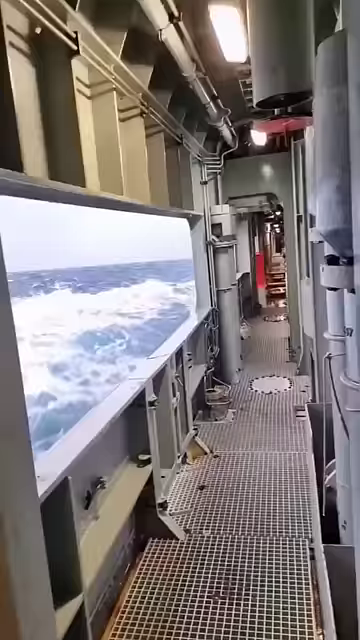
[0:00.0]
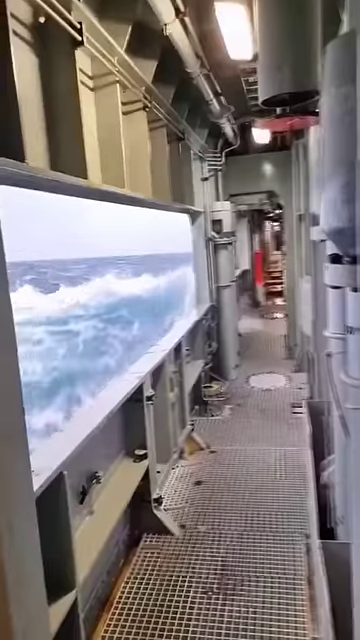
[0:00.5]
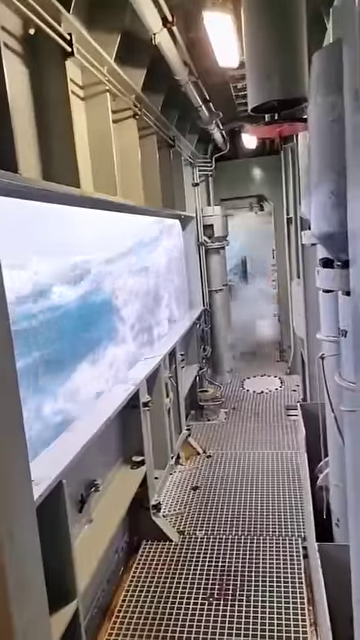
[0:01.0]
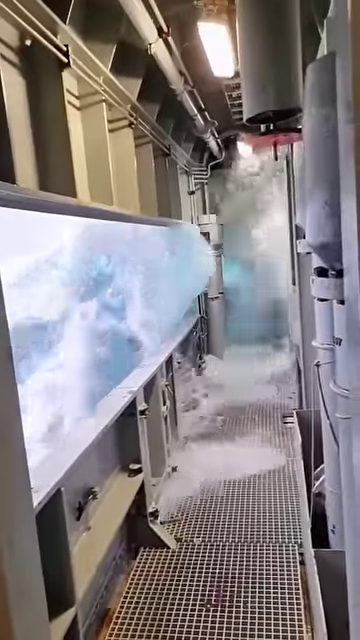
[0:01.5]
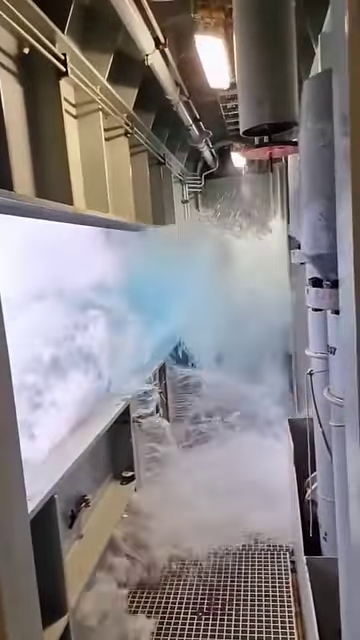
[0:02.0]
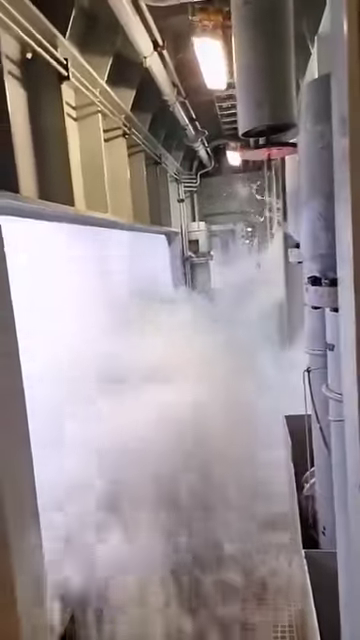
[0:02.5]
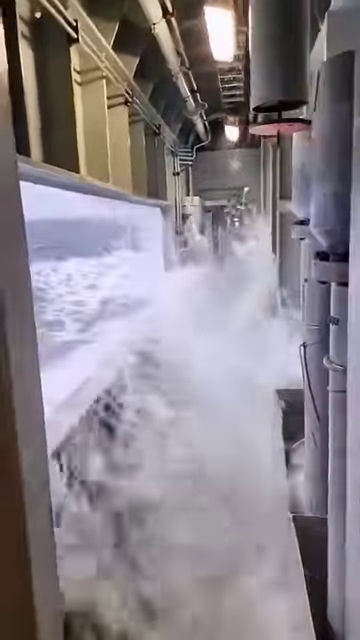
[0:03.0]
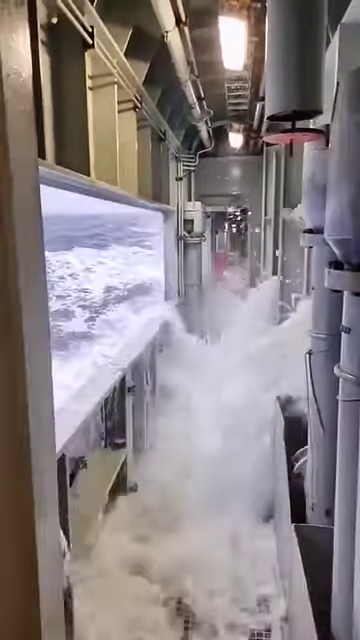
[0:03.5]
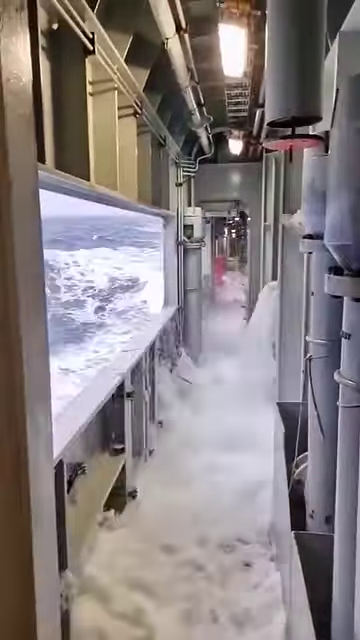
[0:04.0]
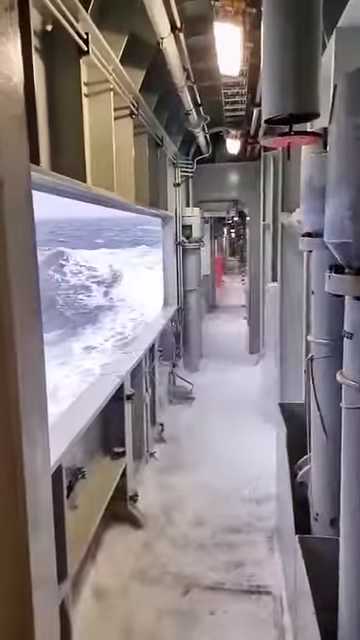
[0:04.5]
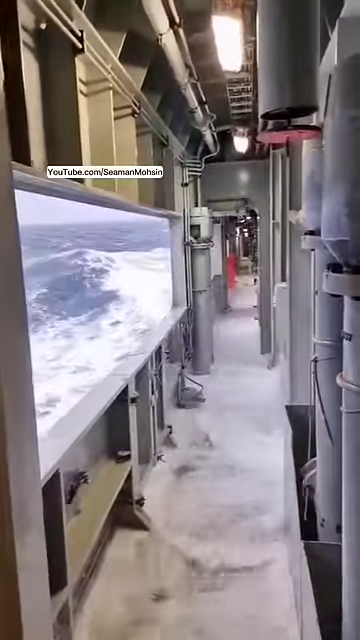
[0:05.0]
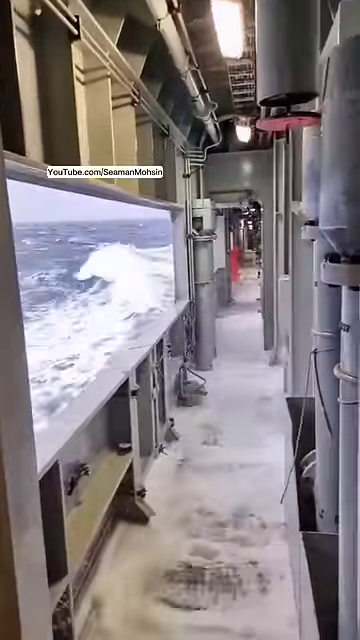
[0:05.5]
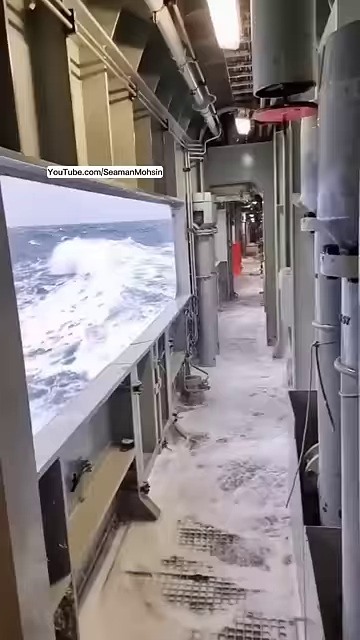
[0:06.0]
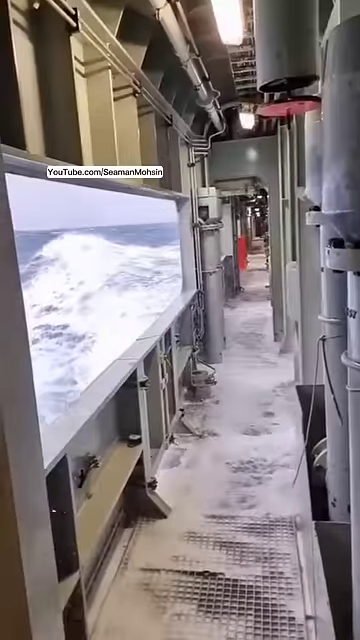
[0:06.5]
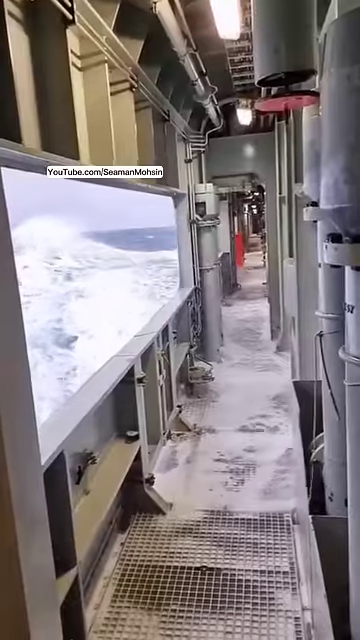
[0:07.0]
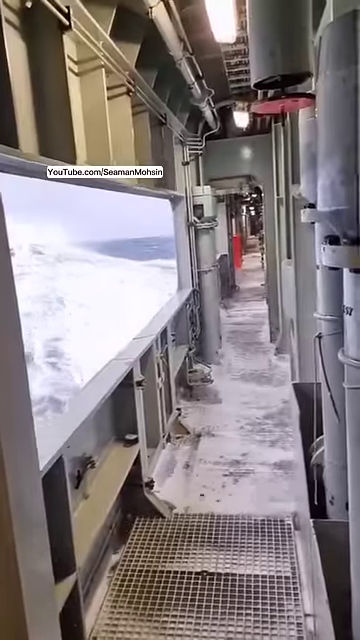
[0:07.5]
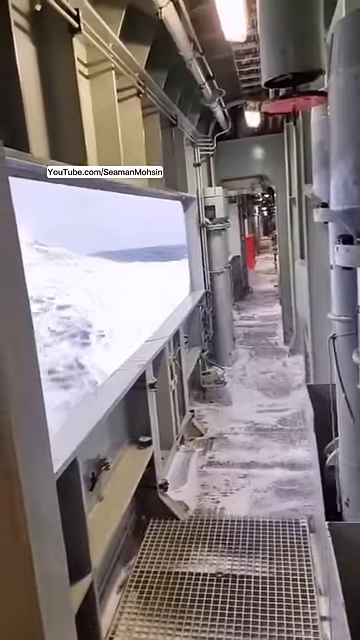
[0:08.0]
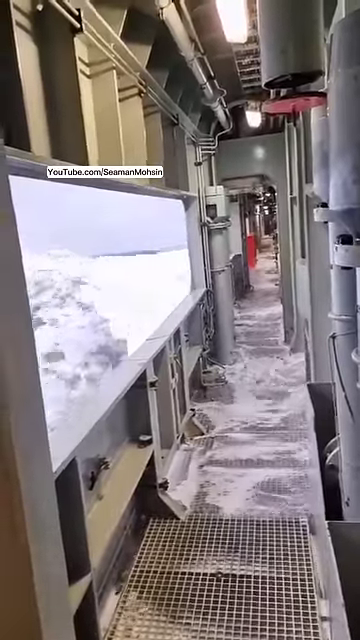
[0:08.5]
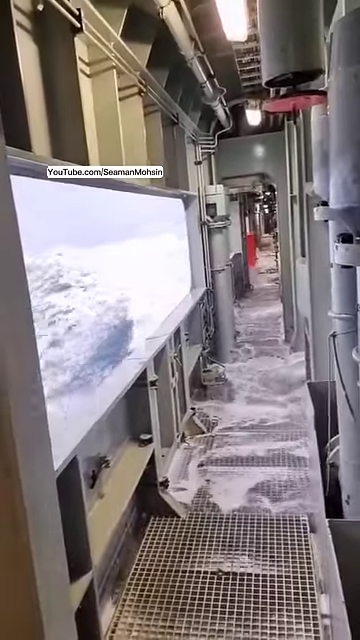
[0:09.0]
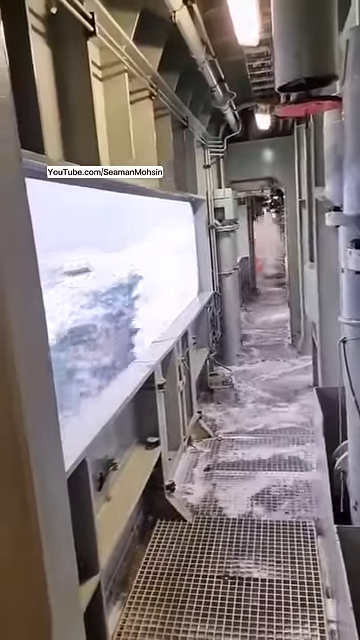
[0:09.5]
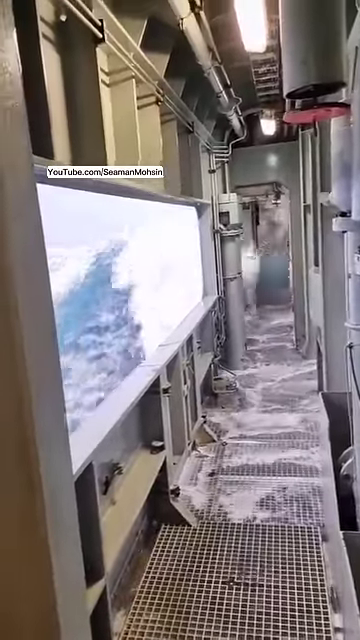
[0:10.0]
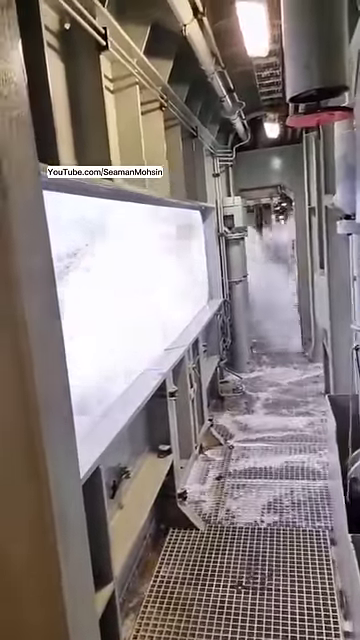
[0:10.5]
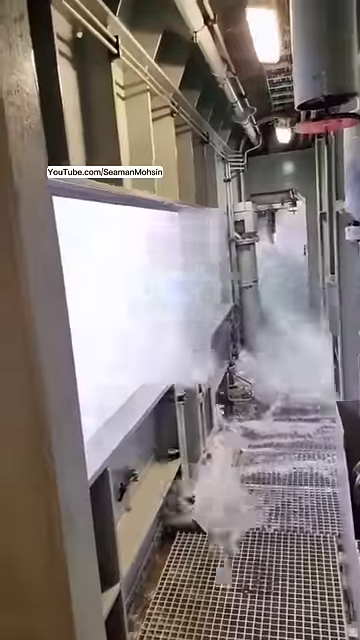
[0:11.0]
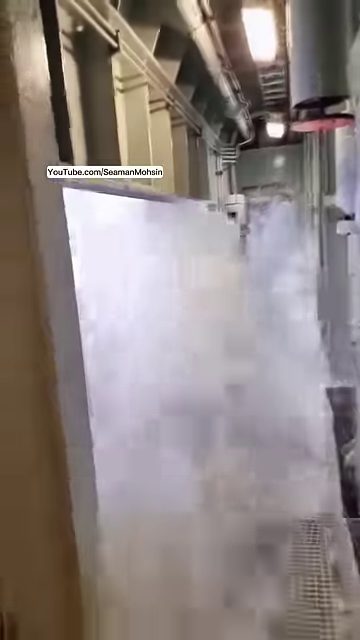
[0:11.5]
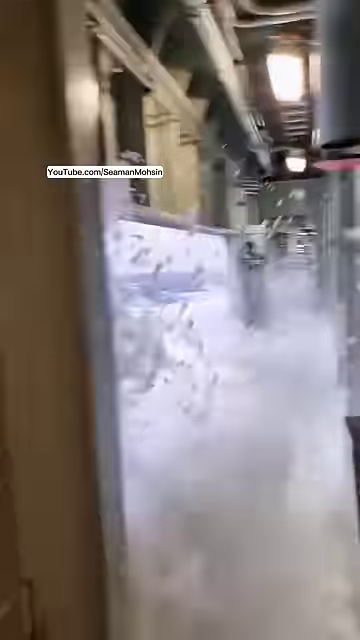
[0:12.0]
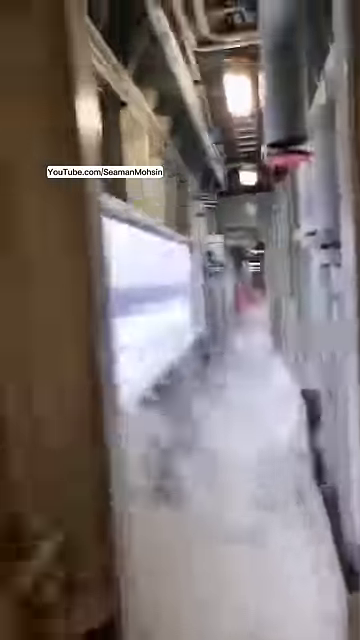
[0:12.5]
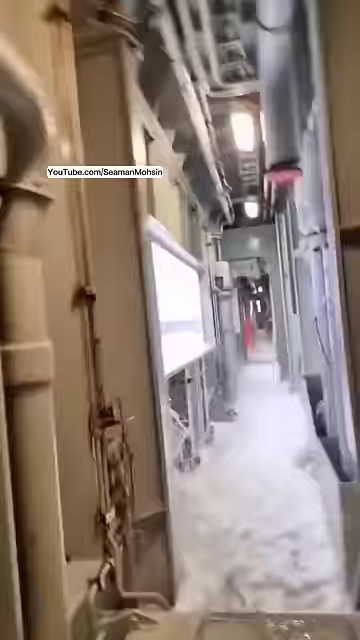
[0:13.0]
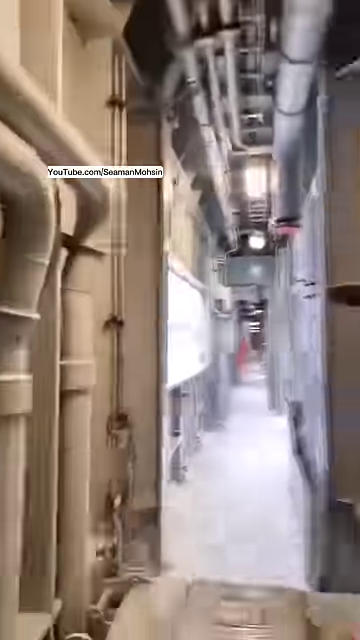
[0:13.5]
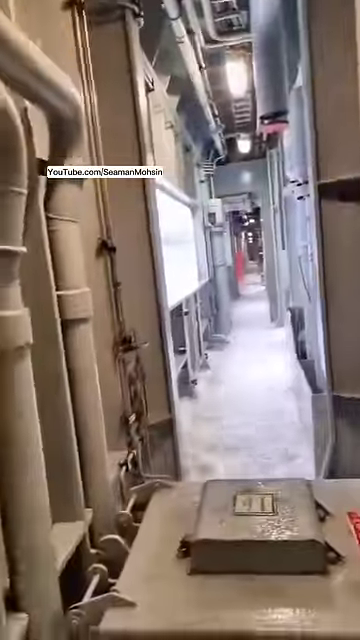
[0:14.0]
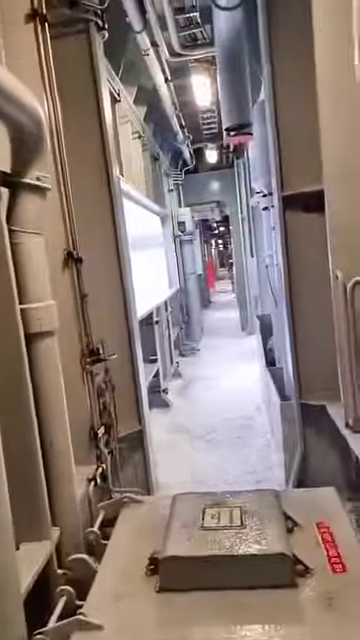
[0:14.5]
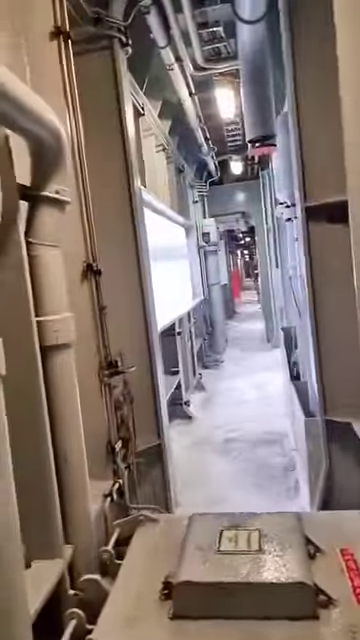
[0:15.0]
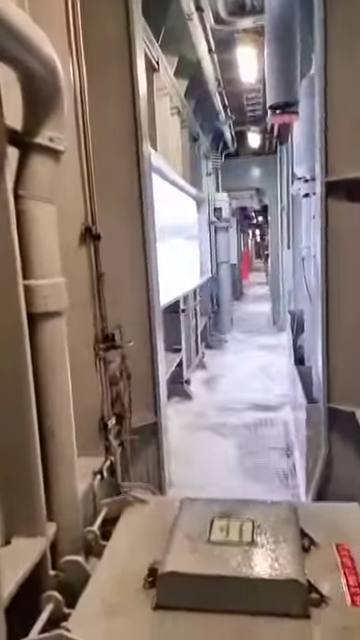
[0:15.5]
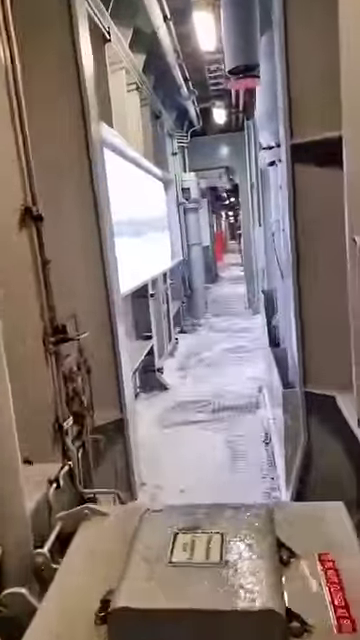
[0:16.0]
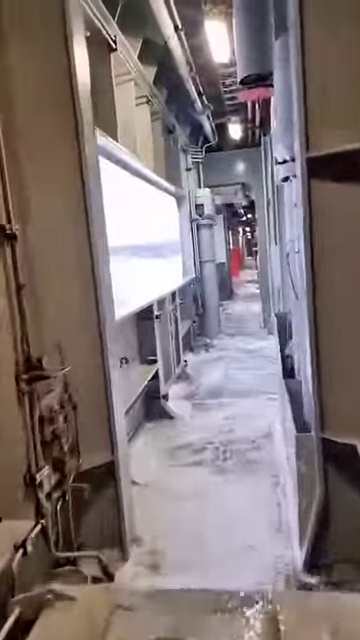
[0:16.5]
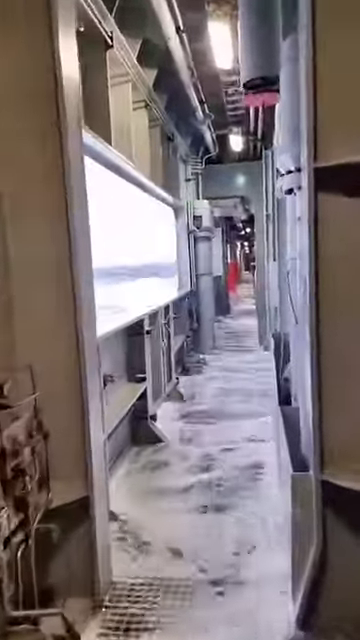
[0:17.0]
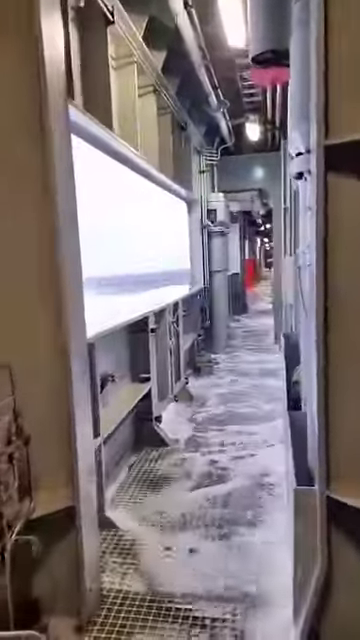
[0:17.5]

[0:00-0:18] A corridor that seems to be the inside of a submarine is shown. For some reason there is an open window in the corridor through which the ocean outside can be seen. There are lots of pipes, lots of metal, and lots of what appear to be machinery-looking objects all over the place. The corridor becomes filled with water, as if there is some sort of leak in the back, but also because a wave comes and the water comes in through the window and fills the entire hallway. There are two illuminated lights on the top of the structure, and there are grates on the bottom for people to walk on. On the left side of the wall there is a rectangular open part where the waves come into the corridor and flood it.